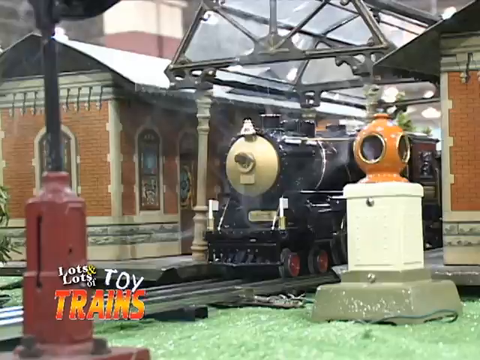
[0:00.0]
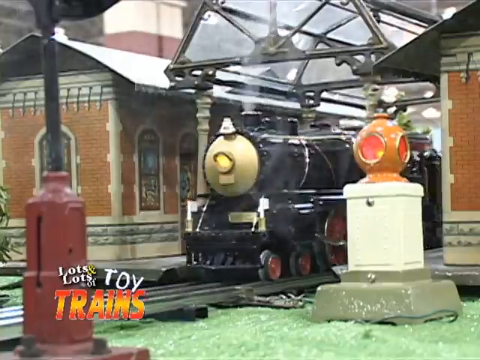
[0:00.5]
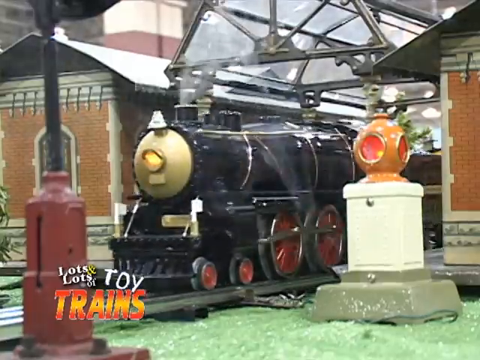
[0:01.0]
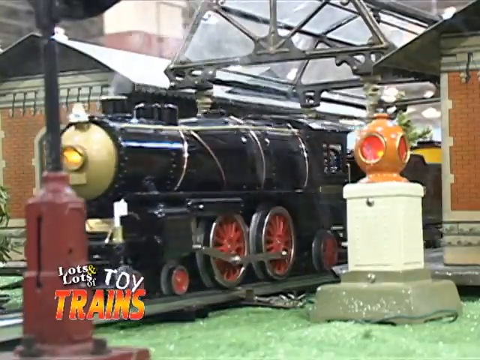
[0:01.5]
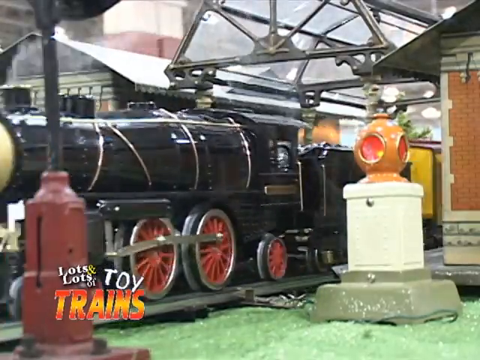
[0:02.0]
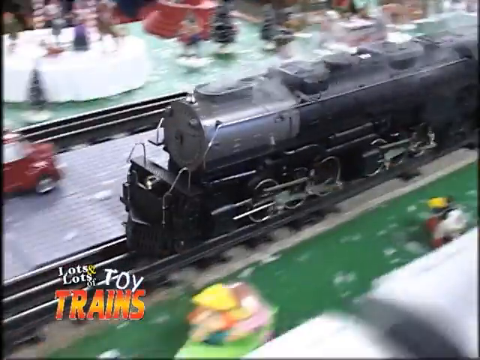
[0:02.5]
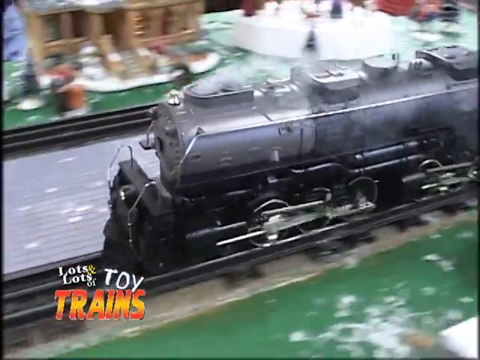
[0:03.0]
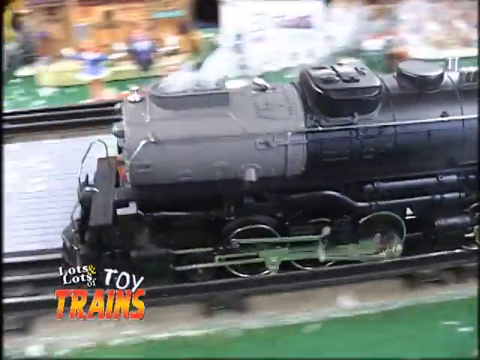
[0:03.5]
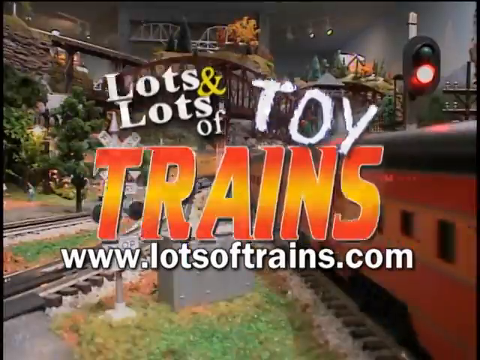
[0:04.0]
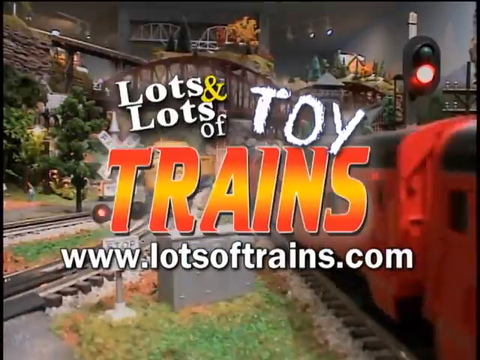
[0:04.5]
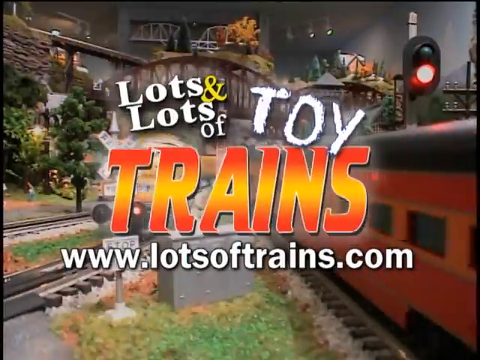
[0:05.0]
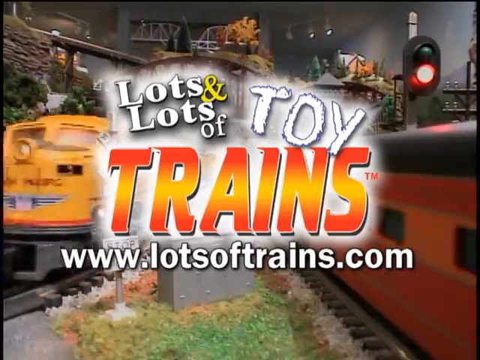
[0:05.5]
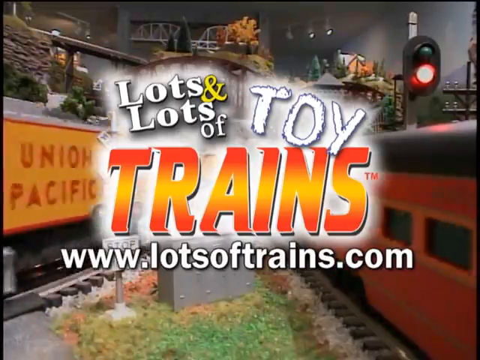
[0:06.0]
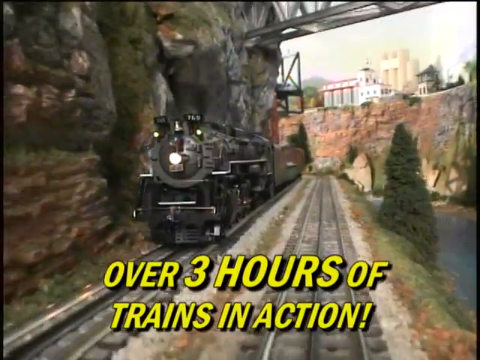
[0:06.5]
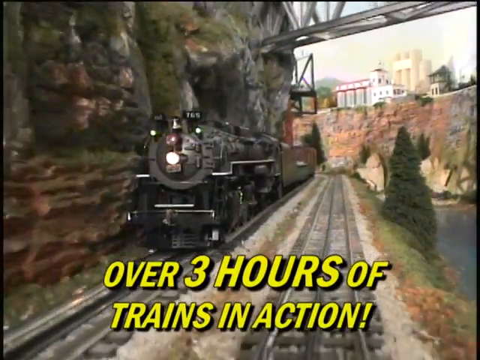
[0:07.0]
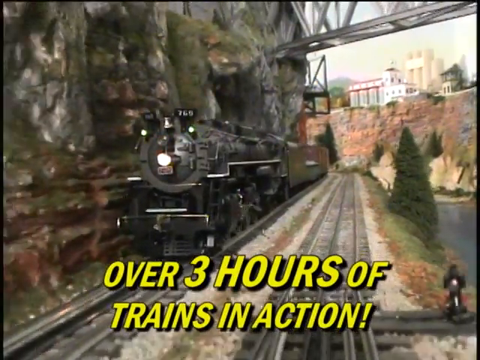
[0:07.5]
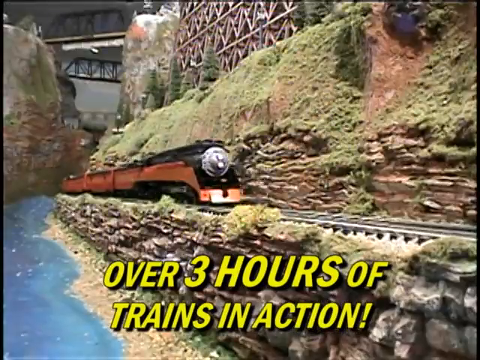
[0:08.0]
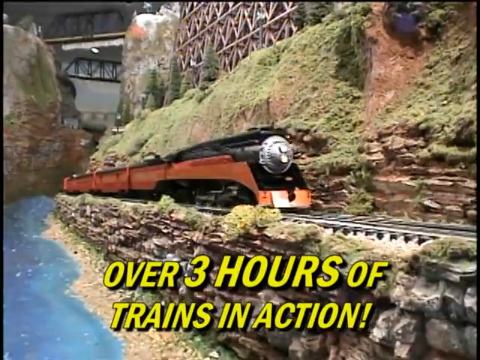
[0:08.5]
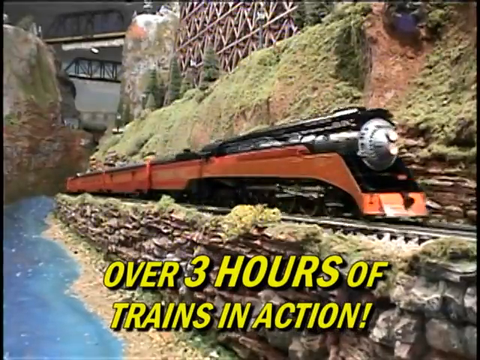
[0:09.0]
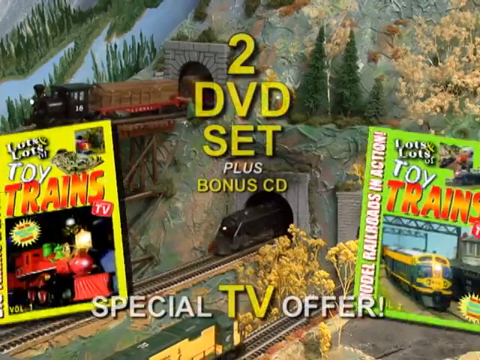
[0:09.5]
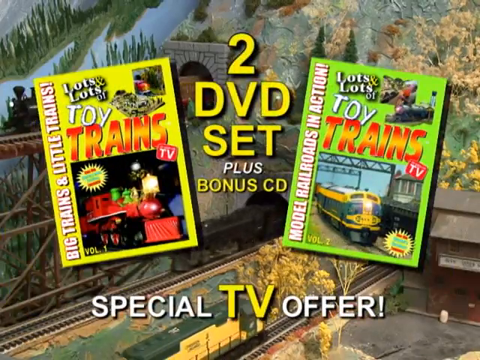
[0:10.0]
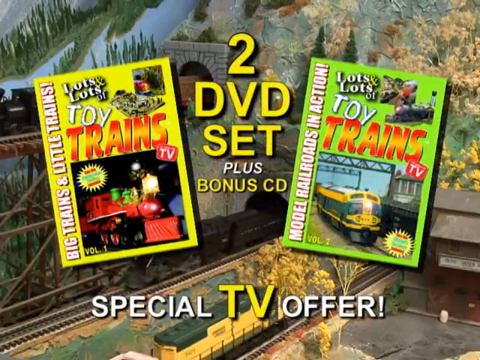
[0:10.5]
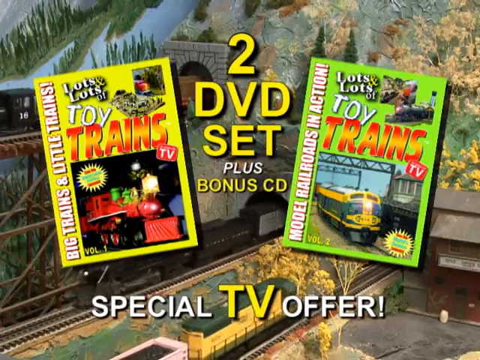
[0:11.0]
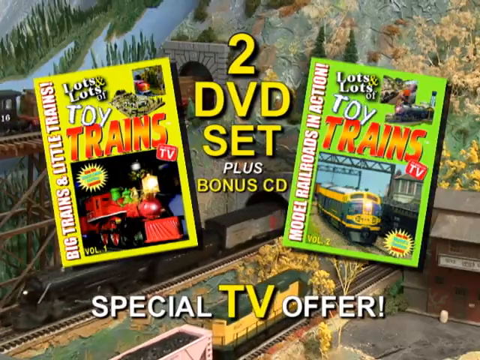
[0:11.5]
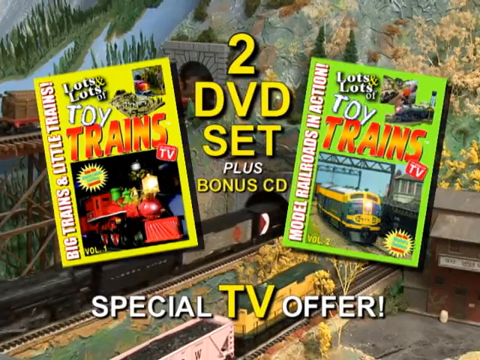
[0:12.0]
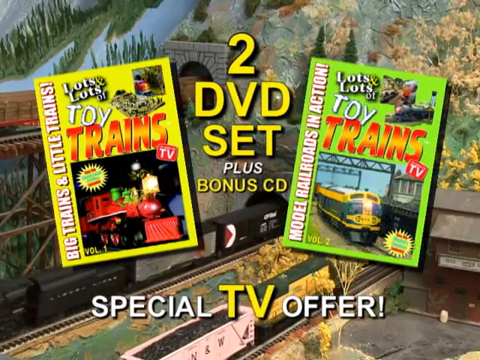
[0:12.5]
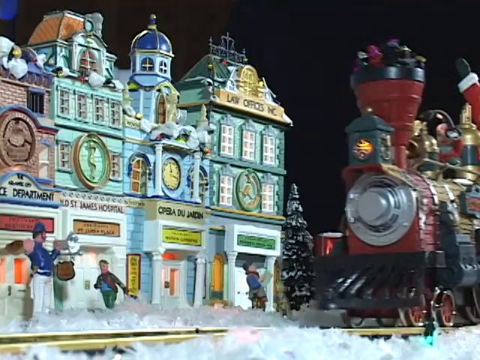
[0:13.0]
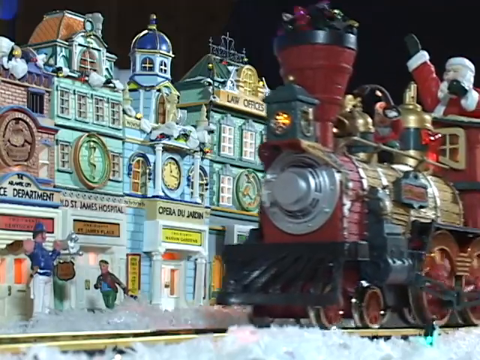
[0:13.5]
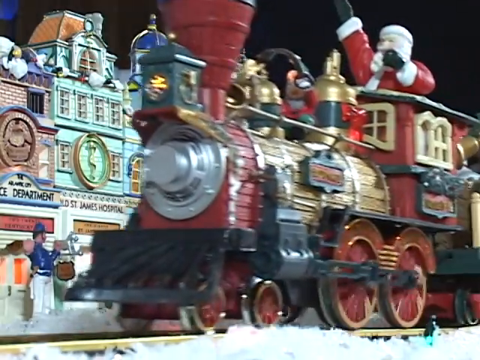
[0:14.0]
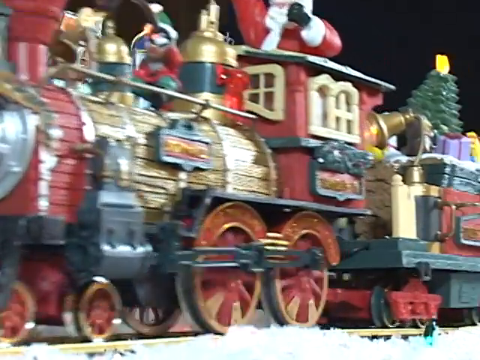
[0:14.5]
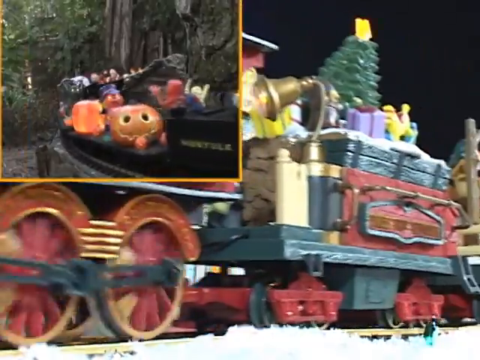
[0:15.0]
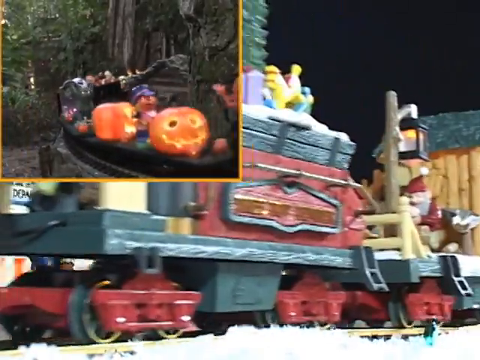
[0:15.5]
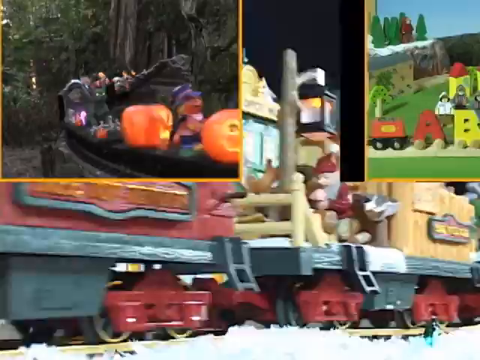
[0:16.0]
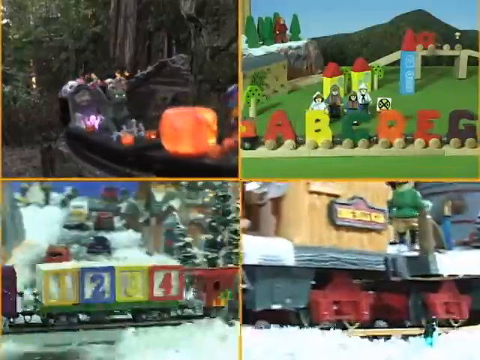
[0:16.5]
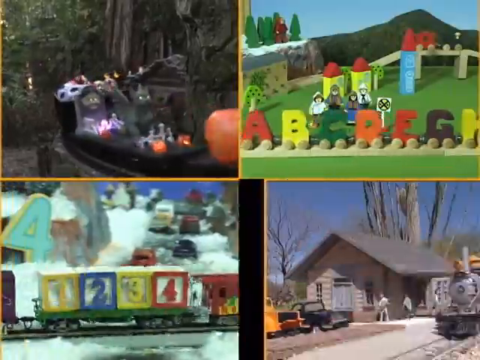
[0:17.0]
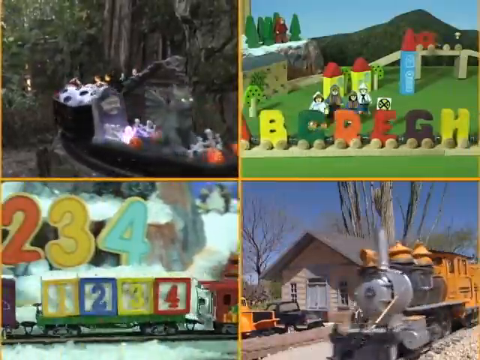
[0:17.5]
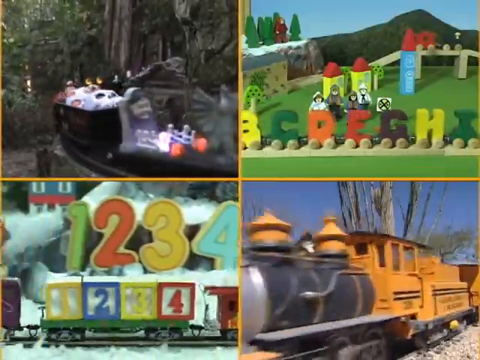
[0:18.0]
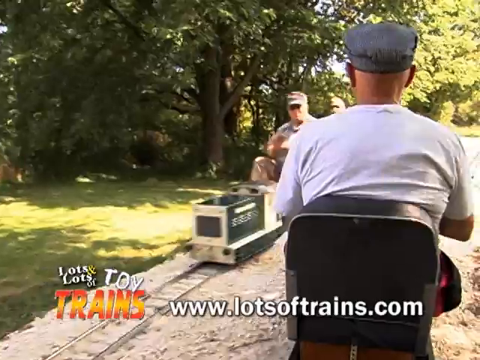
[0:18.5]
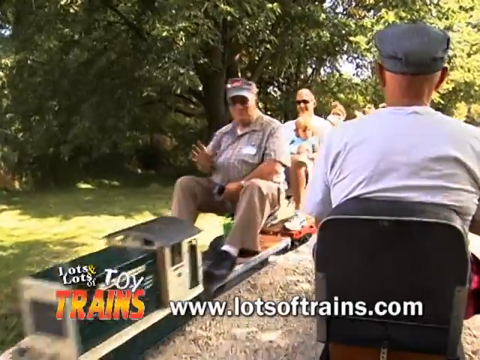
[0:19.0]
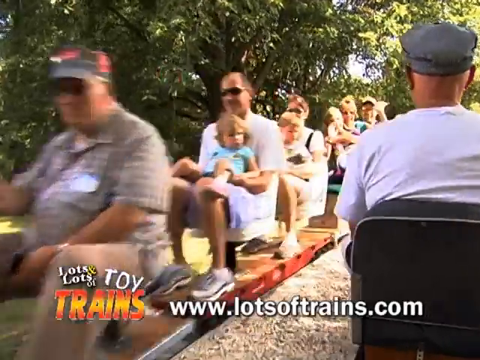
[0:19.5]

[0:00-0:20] A toy train moves to the left of the screen with steam coming down the bottom of the screen, and the text "toy trains" appears. The train pulls out of a station, and in another shot it chugs along. Then "lots and lots of toy trains" appears as text in the middle of the screen, with a website at the bottom, while a red train and a yellow train go past in the background. Yellow text at the bottom of the screen reads "over three hours of trains in action." A black toy train passes by, then a red one passes a river on the right of the screen. Text reads "a two dvd set," and two DVDs are shown: a yellow one on the left and a green one on the right, as a special TV offer, with various toy trains in the background. A very festive, Christmas-themed train with Santa Claus on it is shown, and a Halloween train appears at the top left. The screen is then divided into four, each quarter showing a separate train with a separate theme. Next comes an actual train, one of the small mini trains tourists like to ride, with people waving at another train passing on the other side of the track.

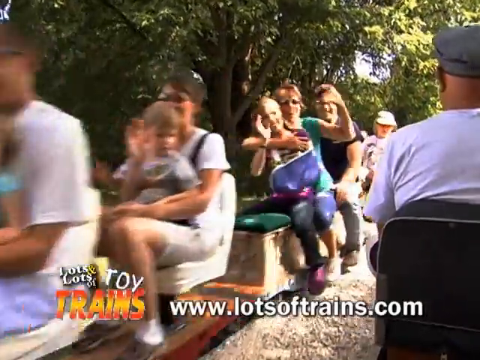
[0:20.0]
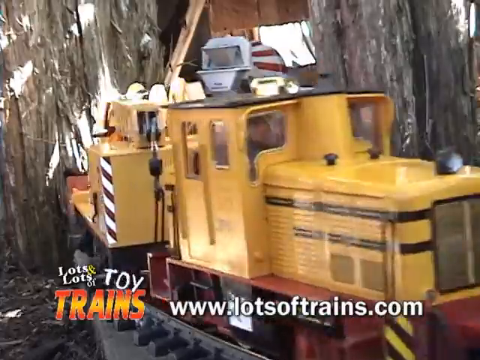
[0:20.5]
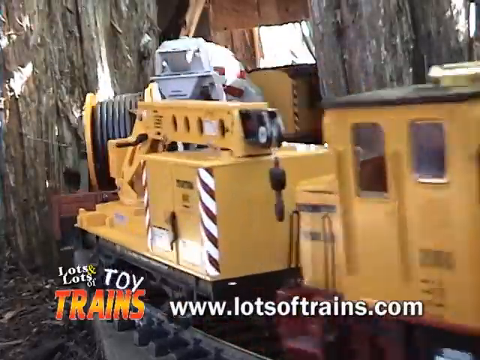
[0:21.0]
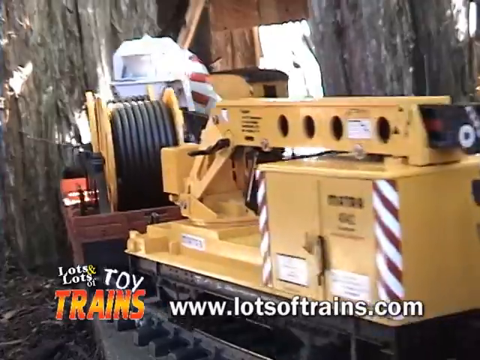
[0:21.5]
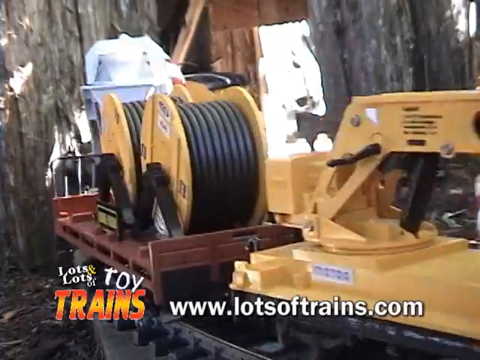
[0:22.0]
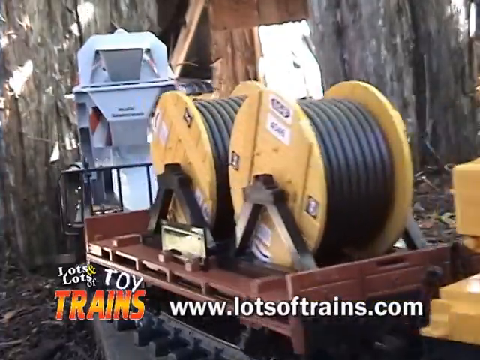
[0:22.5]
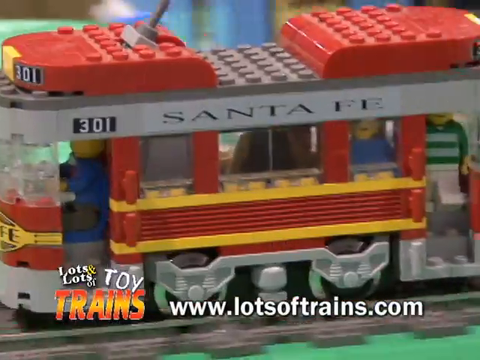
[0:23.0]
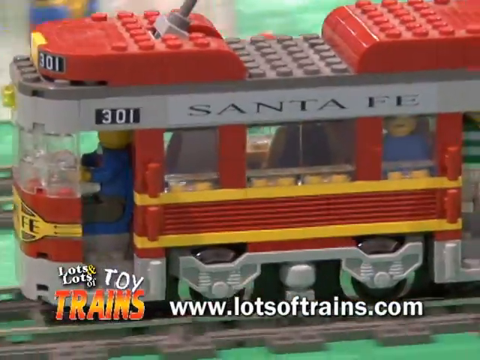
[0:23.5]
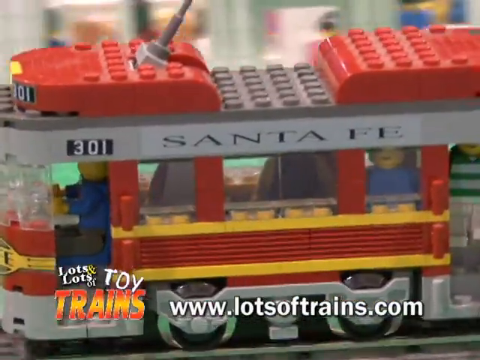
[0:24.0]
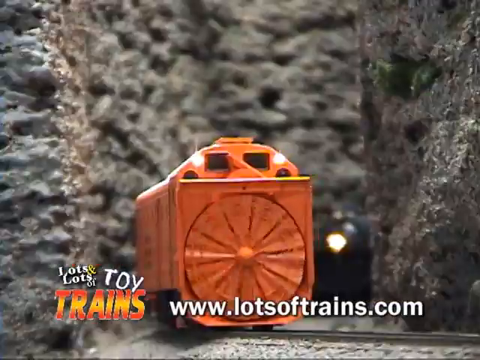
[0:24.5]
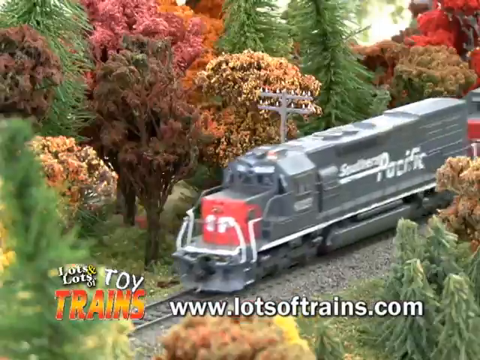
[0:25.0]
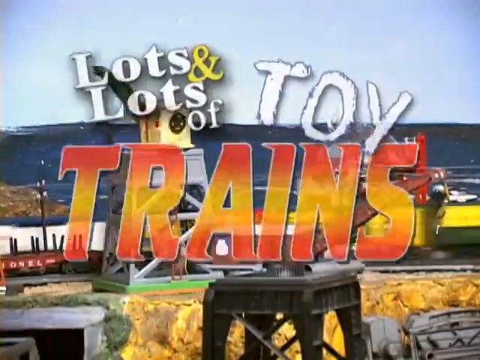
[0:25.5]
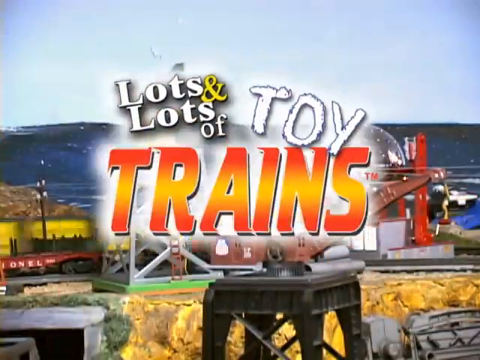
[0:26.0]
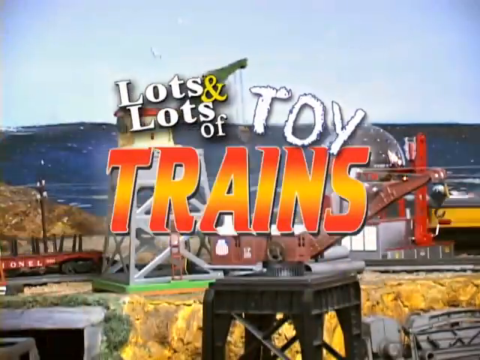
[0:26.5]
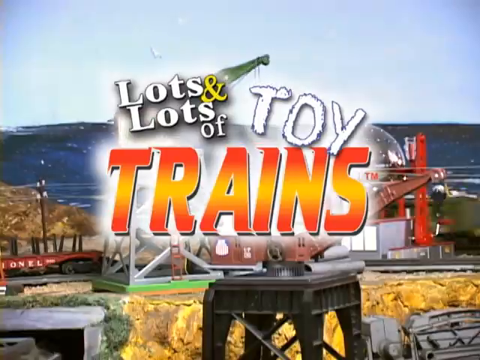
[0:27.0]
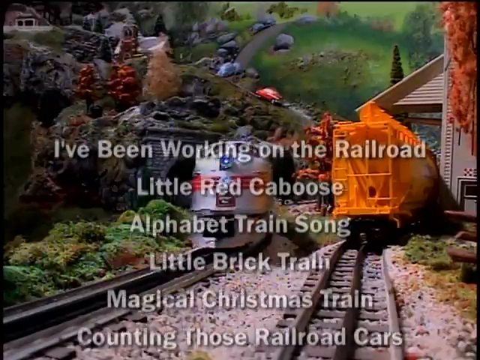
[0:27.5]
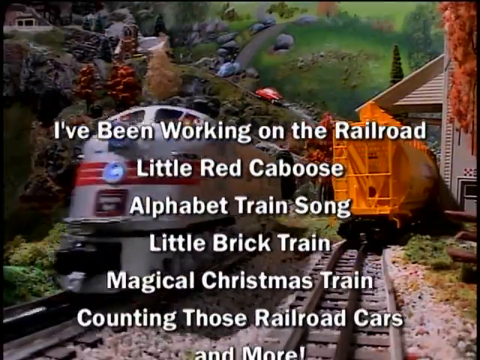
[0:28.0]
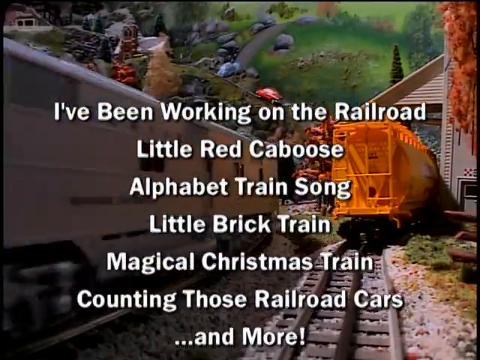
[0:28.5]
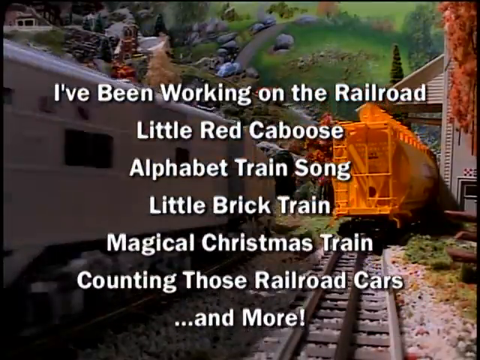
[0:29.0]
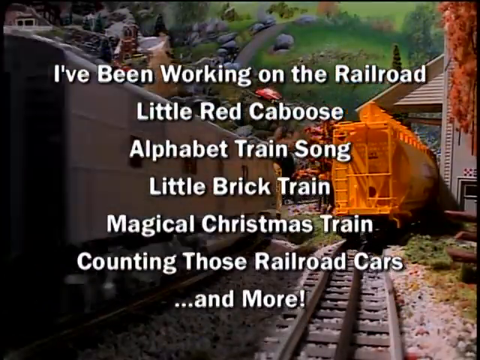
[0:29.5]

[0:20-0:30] Text at the bottom of the screen reads "lotsoftrains.com," and at the bottom left it reads "lots and lots of toy trains." Something like a large toy train appears, and another one turning as it goes across the screen looks like a Lego train marked "Santa Fe." A flurry of different trains appears all at once with "lots and lots of toy trains" on the screen, and a white train flashes. A grey toy train goes past the screen as white text lists train songs: "I've been working on the railroad," then "red caboose" and "alphabet train song."